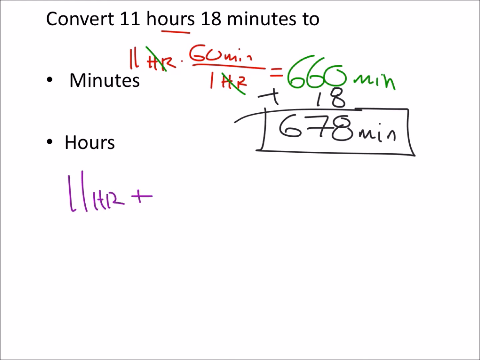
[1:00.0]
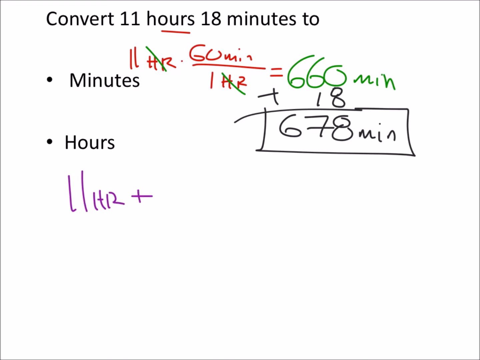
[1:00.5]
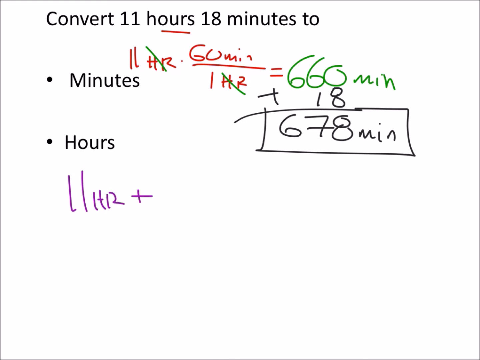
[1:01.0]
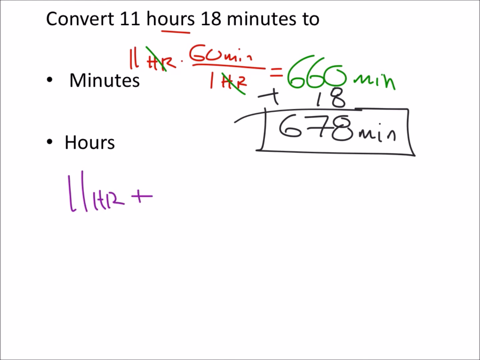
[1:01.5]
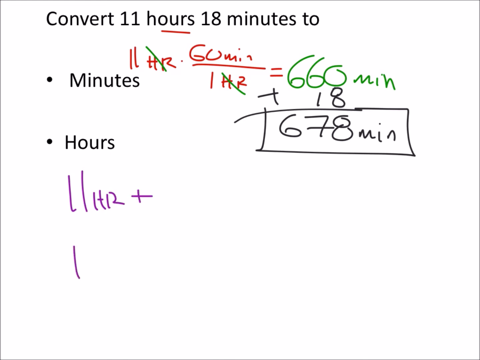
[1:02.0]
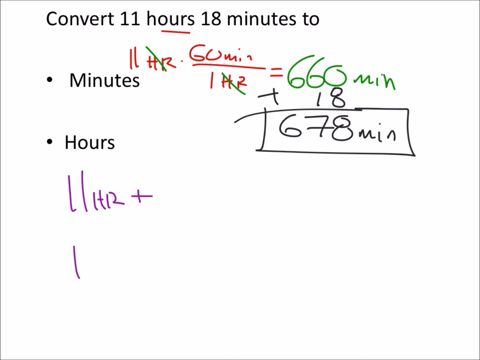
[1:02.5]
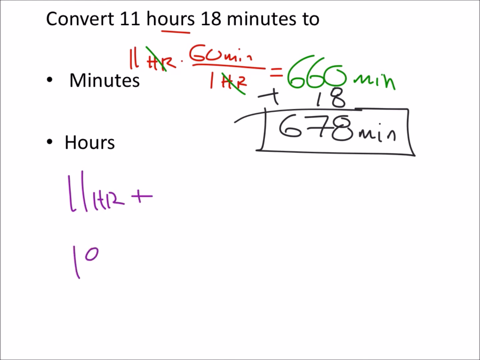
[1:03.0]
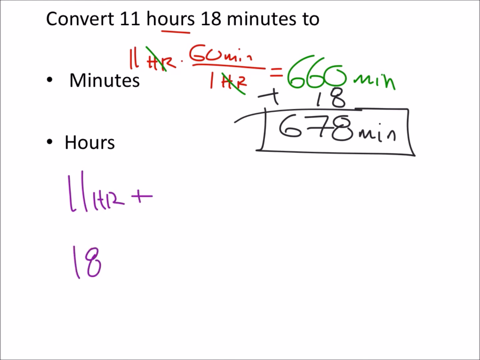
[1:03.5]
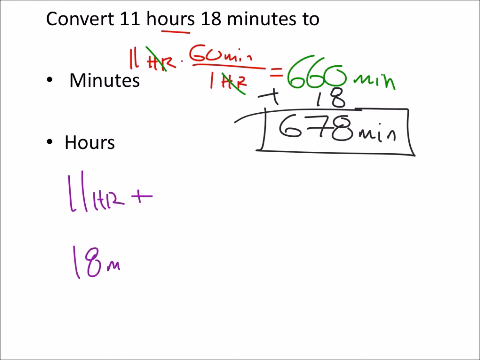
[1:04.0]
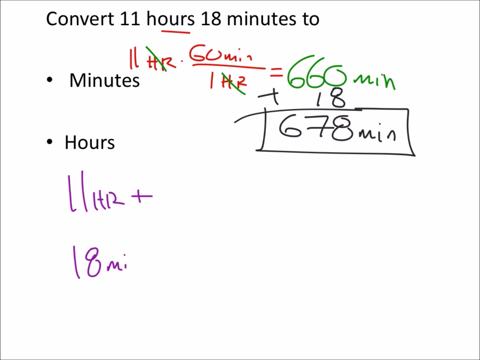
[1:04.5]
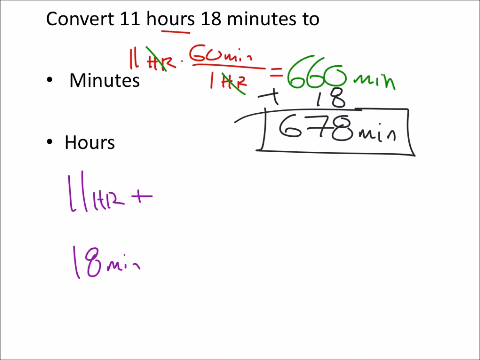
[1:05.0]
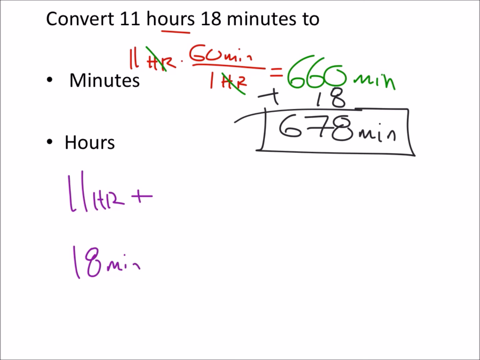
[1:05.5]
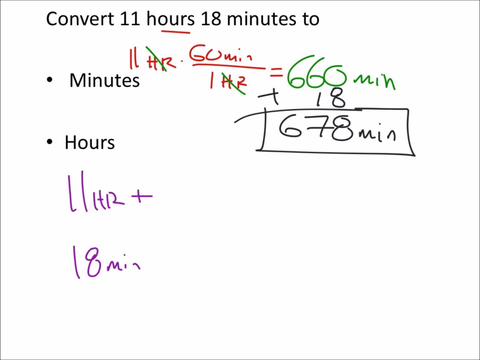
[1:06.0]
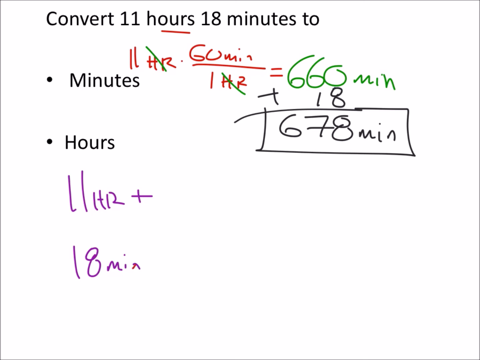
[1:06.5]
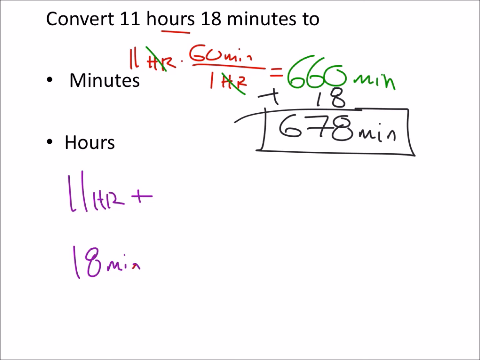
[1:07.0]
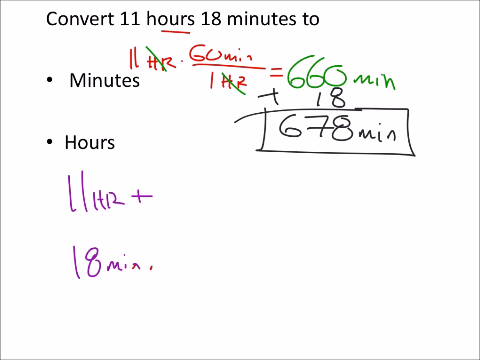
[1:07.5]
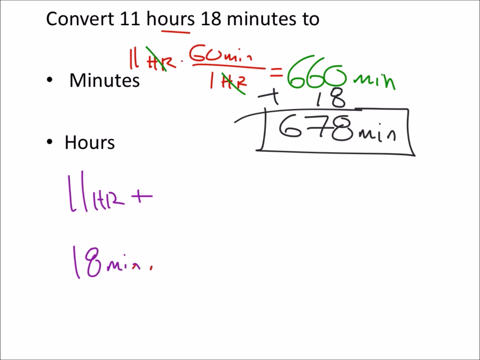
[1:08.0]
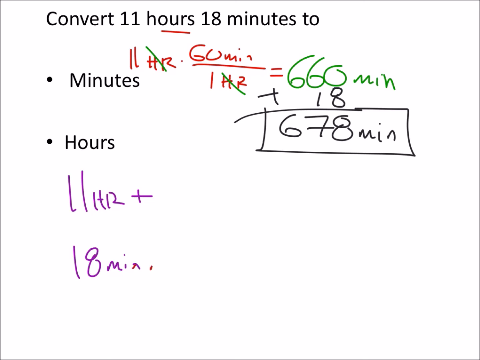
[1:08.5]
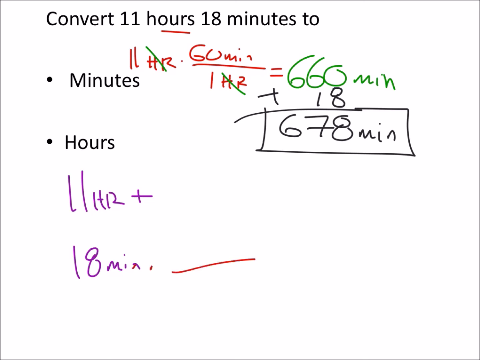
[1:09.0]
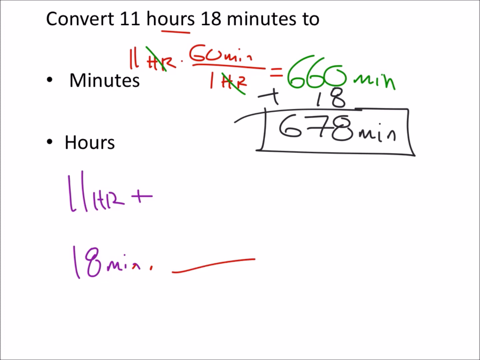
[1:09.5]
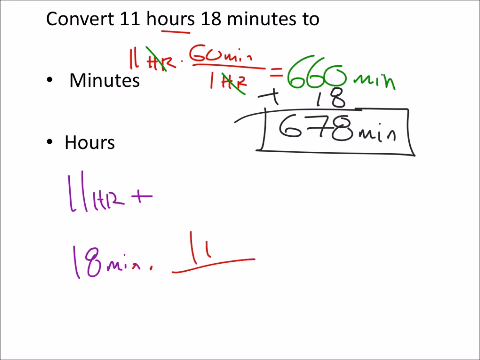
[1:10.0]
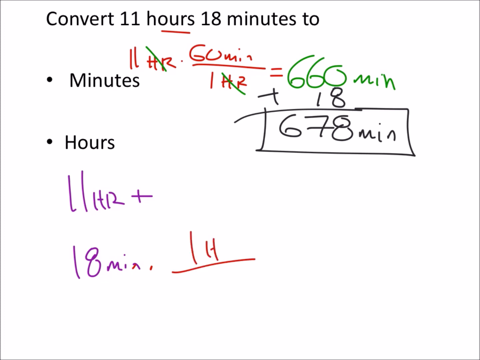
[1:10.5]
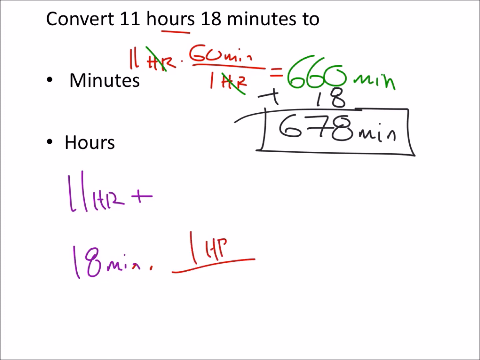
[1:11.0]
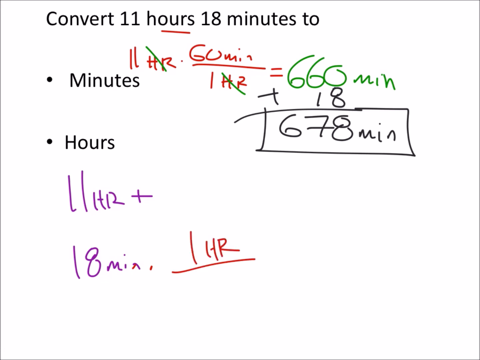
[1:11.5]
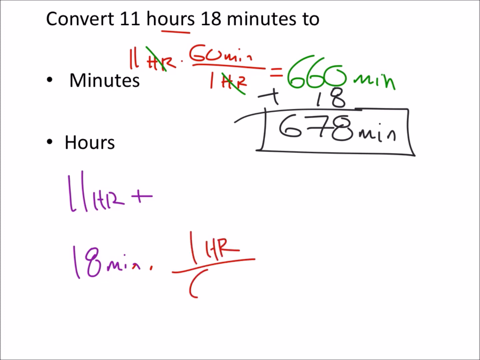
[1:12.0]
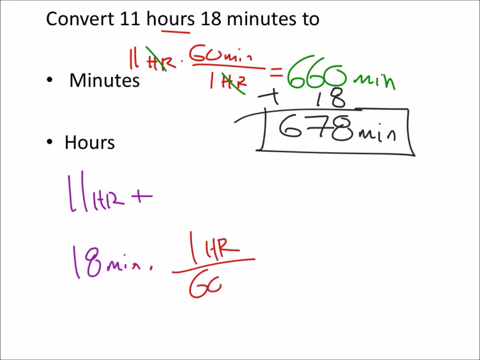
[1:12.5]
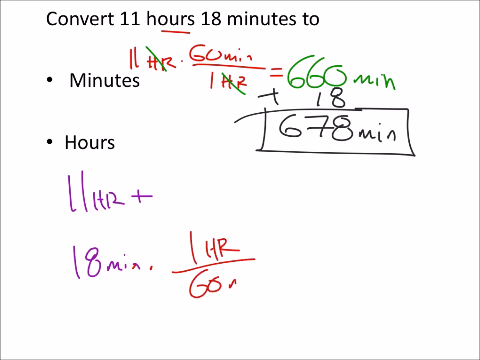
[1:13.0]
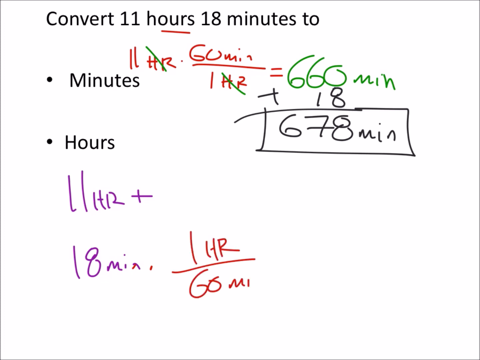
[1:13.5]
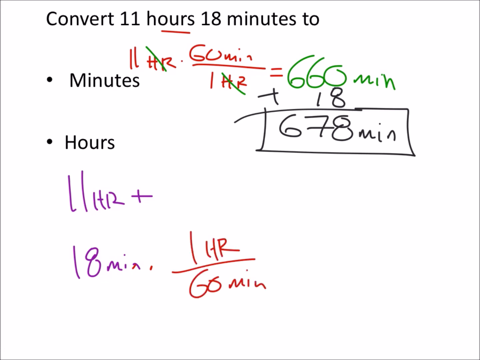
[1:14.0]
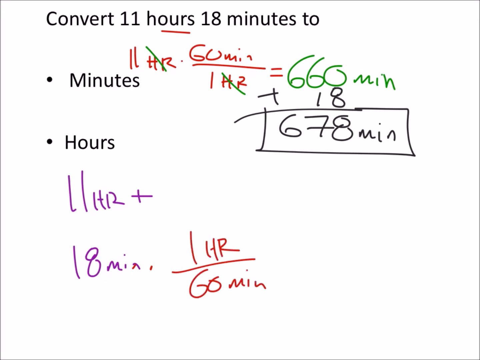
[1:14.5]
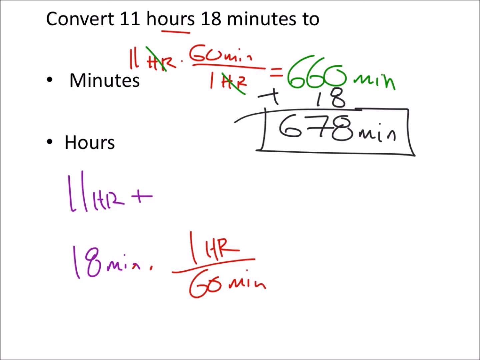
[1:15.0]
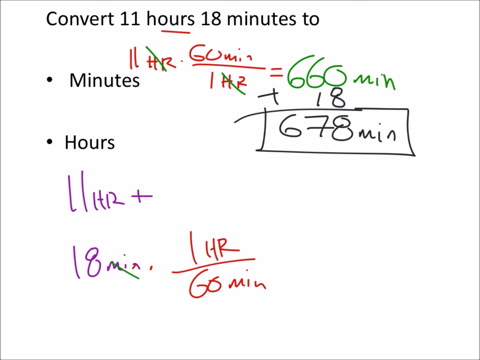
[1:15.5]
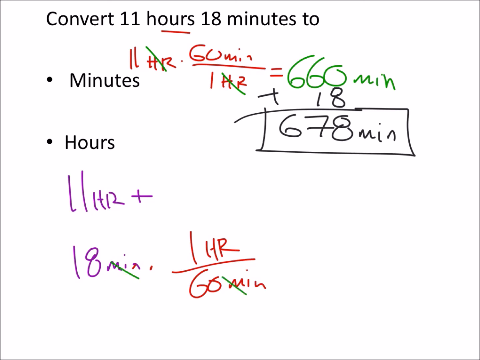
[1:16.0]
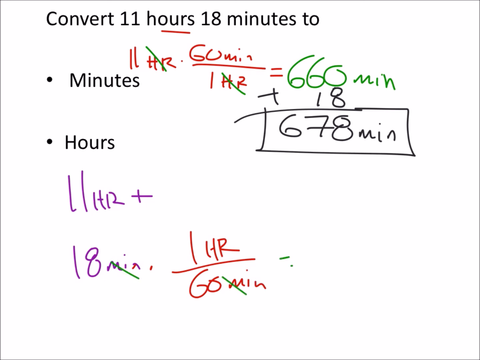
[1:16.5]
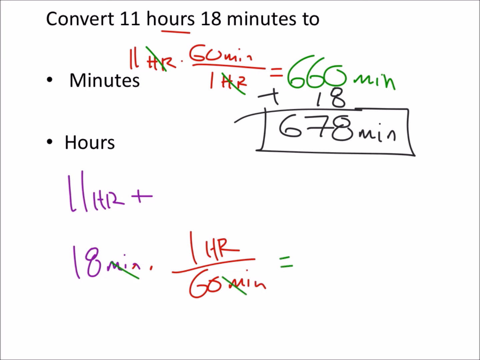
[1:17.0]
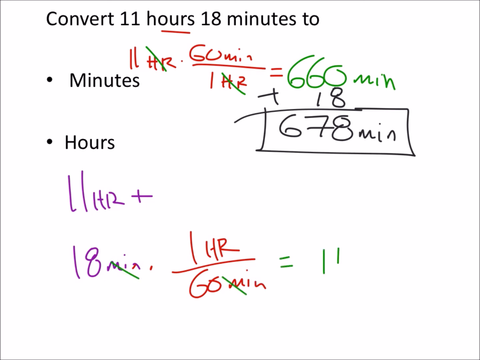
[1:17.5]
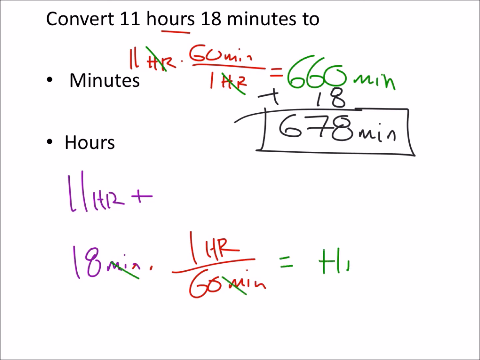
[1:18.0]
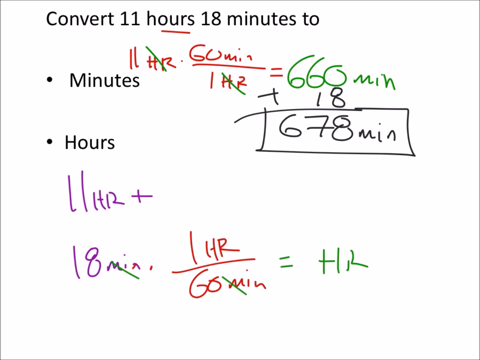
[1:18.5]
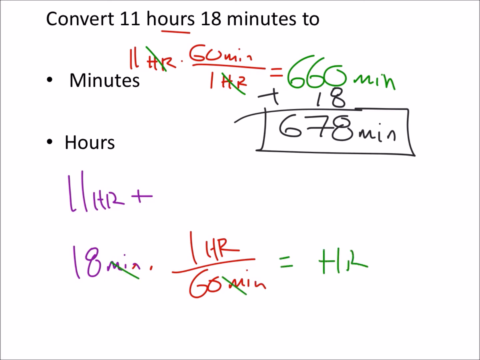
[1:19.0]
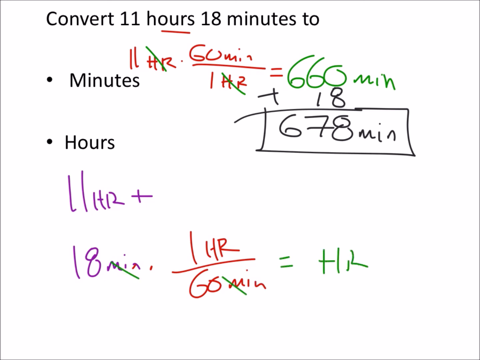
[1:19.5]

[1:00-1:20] On a white background, black text at the top reads "convert 11 hours 18 minutes to", with two bullet points underneath for answers in minutes and hours. To the right of the "minutes" bullet point is an equation that looks like it was handwritten in brown marker, reading "11 HR times 60 min over 1 HR equals", followed in green marker by "660 min"; the "HR" labels are slashed with a diagonal green line. Underneath "660 min", in black marker, is "plus 18", a line for the answer, and beneath that the answer "678 min" with a box drawn around it. Under the "hours" bullet point, purple marker text reads "11 HR +". Underneath that, "18 min" is being written, and then the writing switches to brown marker for "times 1 HR over 60 min". Both "min" labels are slashed with green marker, and "= HR" is written to the right side of the equation.